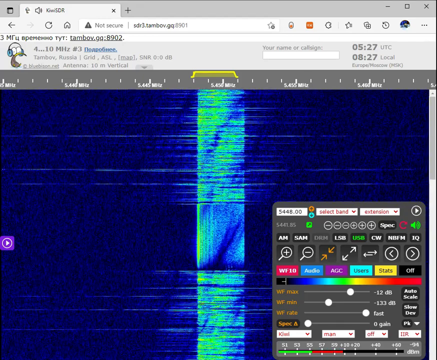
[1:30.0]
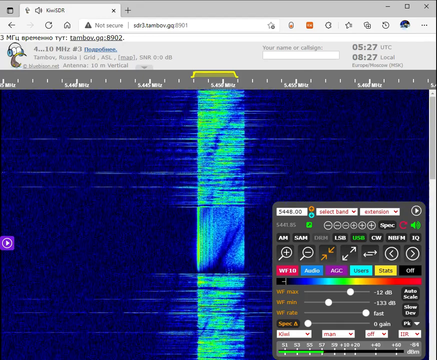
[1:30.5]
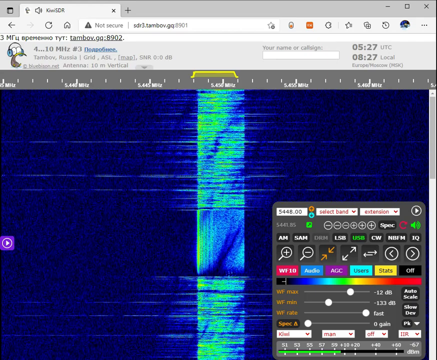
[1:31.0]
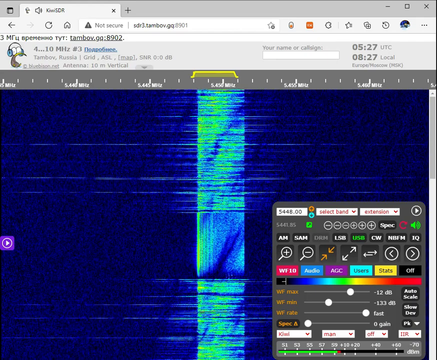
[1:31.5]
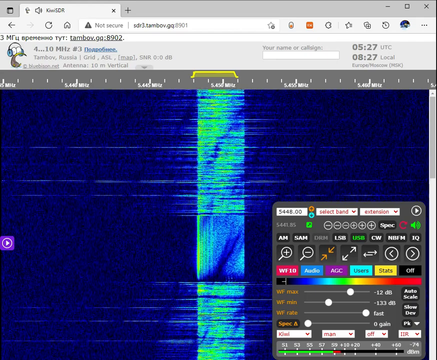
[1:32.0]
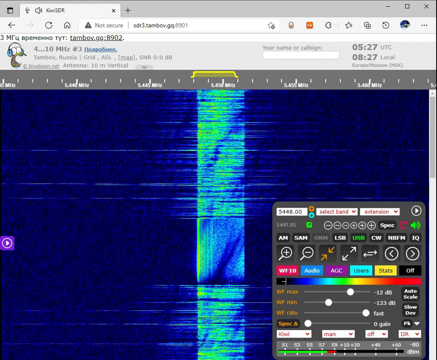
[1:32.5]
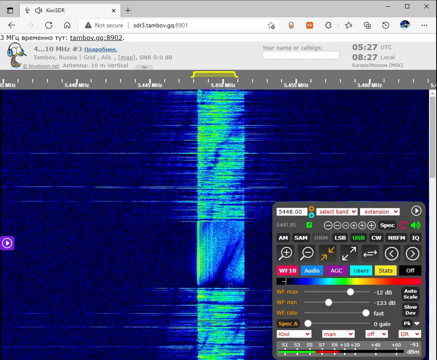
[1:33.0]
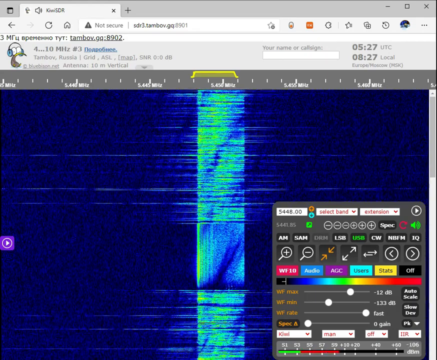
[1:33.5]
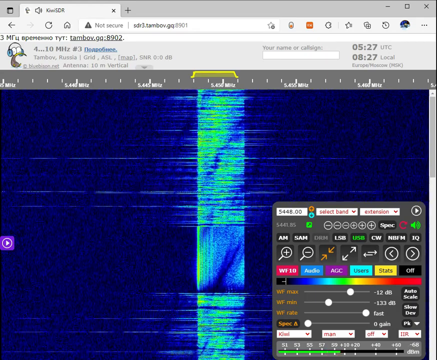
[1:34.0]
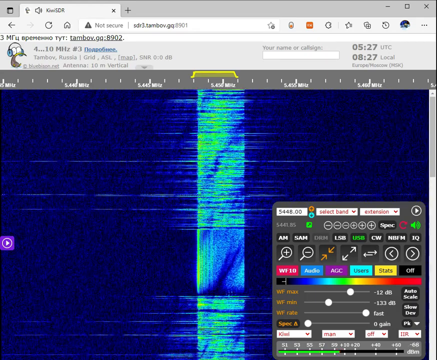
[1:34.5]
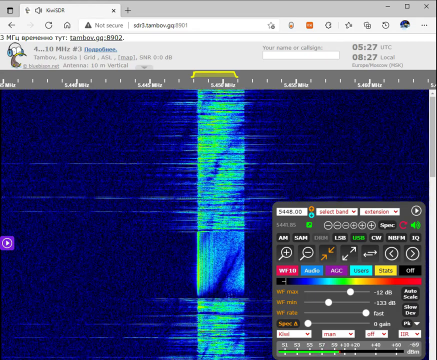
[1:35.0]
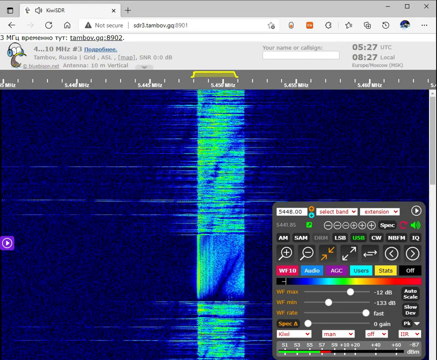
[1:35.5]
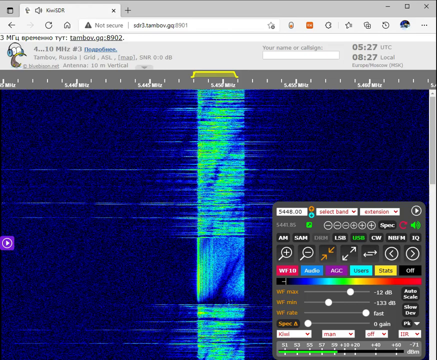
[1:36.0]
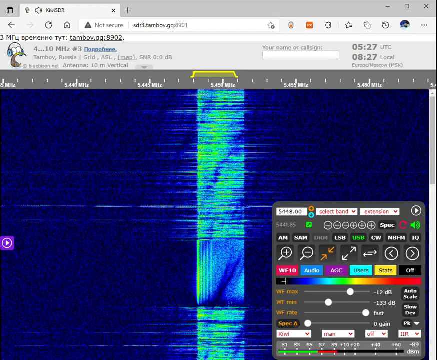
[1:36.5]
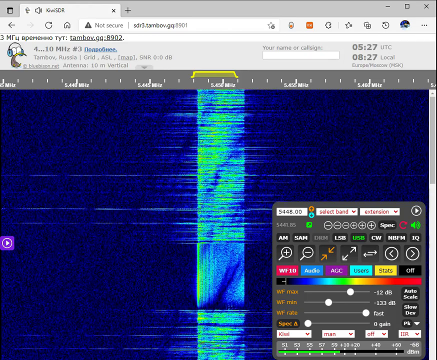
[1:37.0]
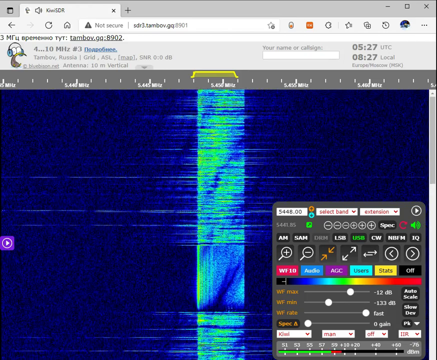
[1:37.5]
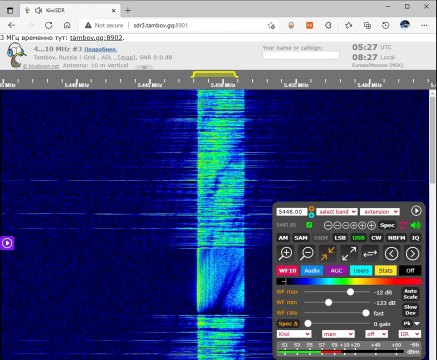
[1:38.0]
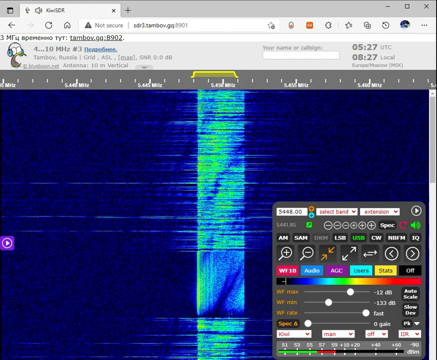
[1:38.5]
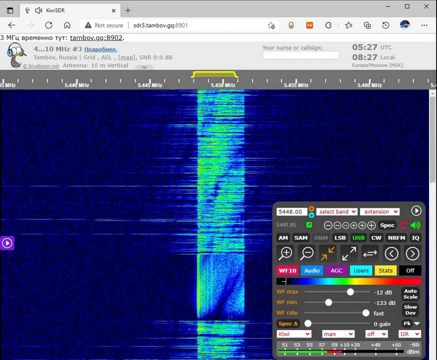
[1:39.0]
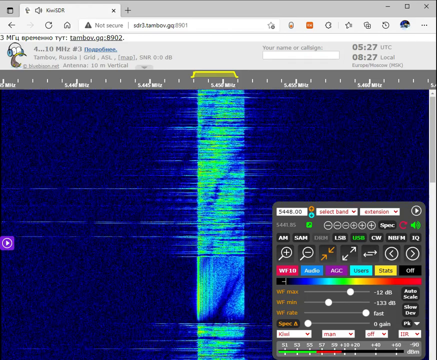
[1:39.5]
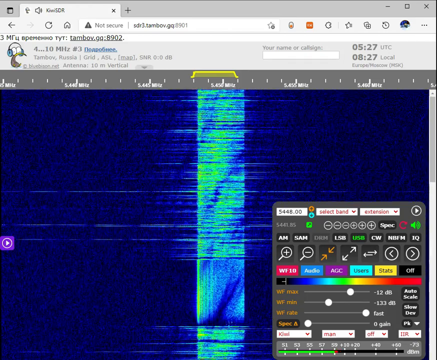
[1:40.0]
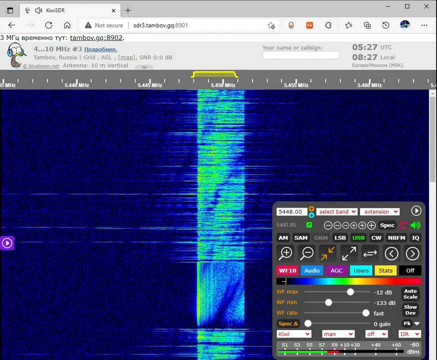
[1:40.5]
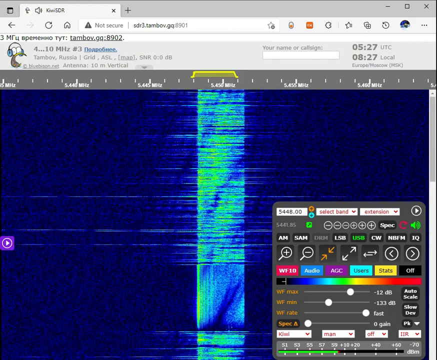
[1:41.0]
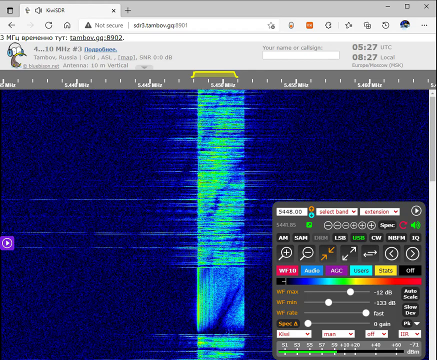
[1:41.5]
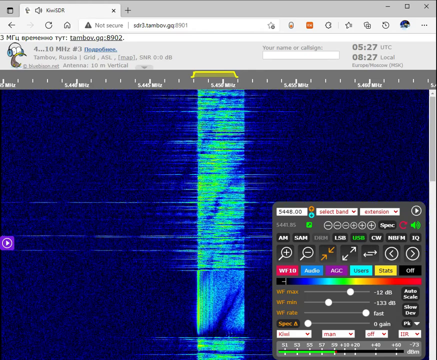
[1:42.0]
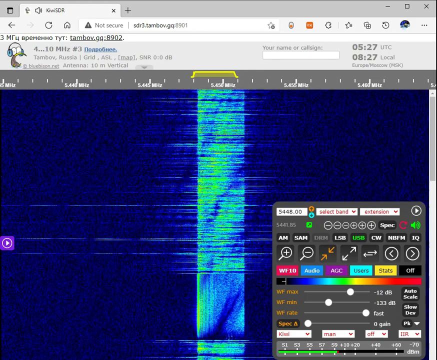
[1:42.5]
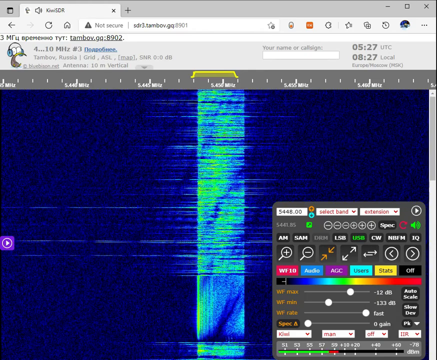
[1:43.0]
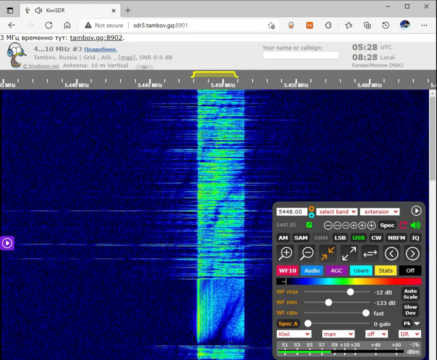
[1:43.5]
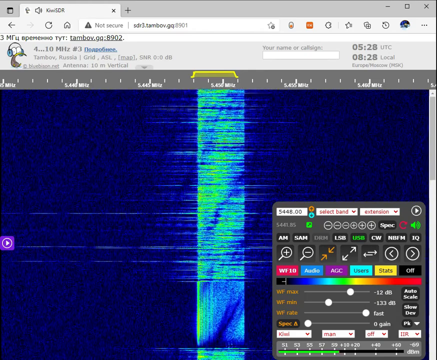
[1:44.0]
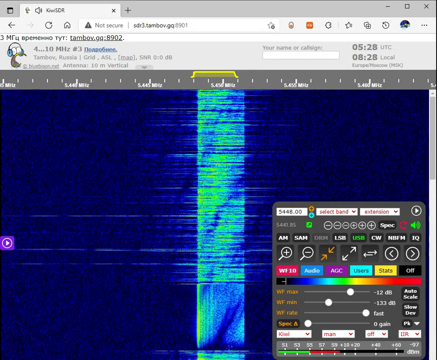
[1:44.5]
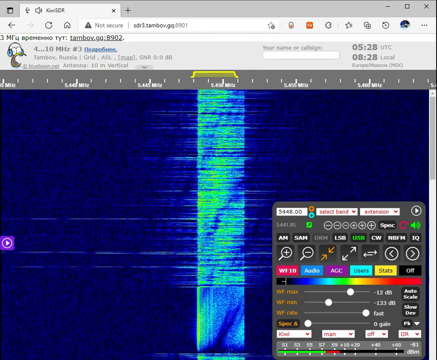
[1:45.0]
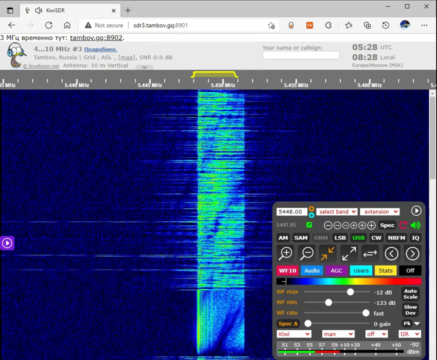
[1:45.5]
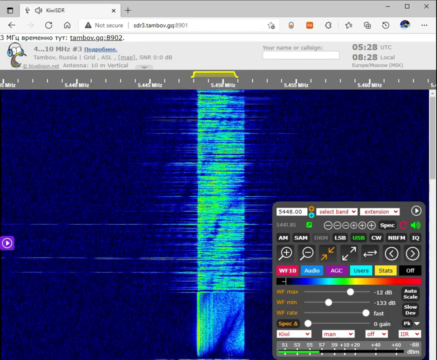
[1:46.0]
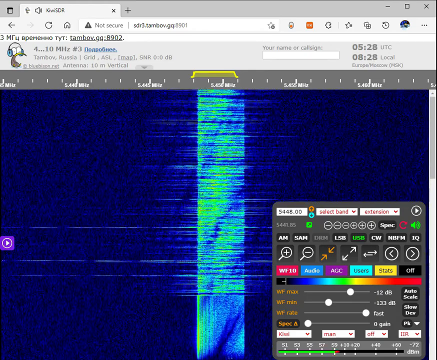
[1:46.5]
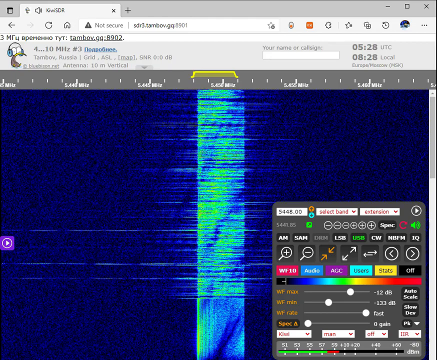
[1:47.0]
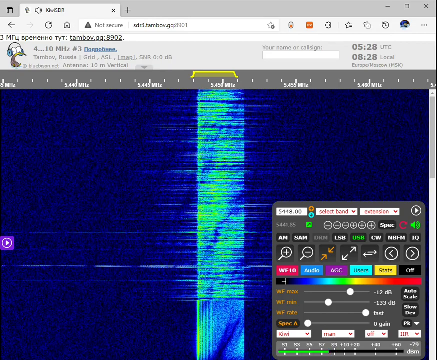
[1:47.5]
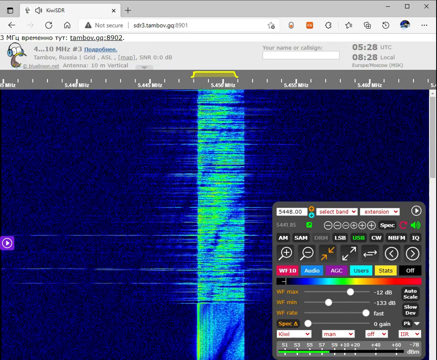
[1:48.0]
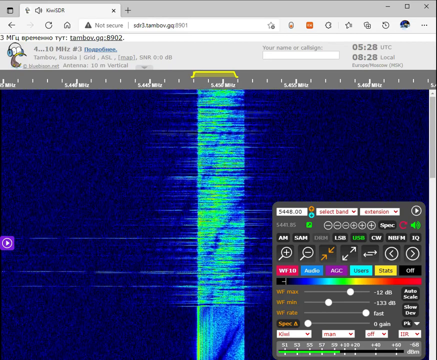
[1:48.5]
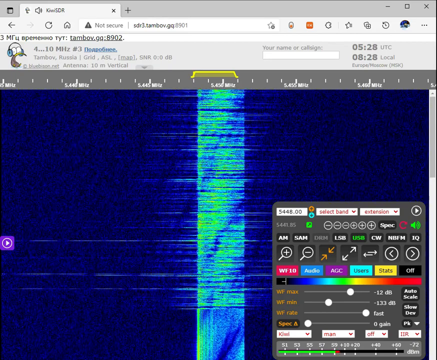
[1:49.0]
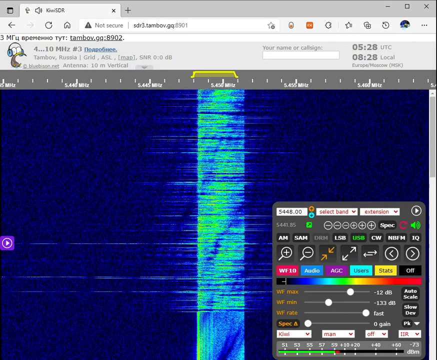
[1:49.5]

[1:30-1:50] The pattern in the middle of the screen returns to a thick, wide band of yellow and light green coming from the top and moving downward. Less of the blue background pokes through, though some swoops still appear. The whole band seems wider, with very faint but visible lines extending out on either side. In places where the well-formed swoop of background color appeared, these faint side lines disappeared, and when the band returned to a greener-yellow color with only a little blue swooping through, the wider, shadowy, faint lines extending off the screen on either side came back.